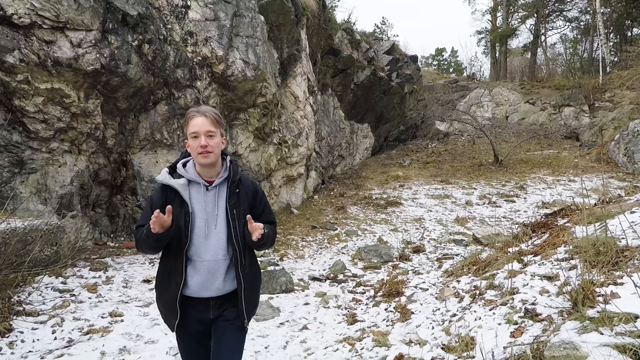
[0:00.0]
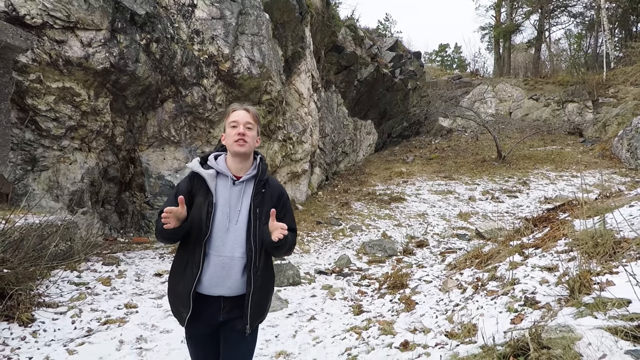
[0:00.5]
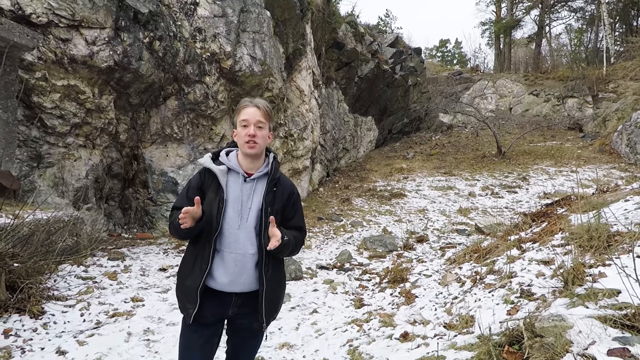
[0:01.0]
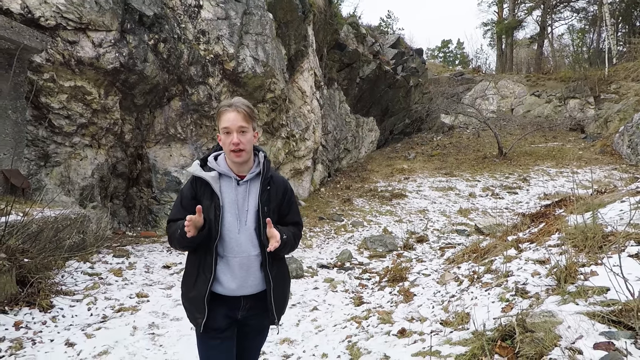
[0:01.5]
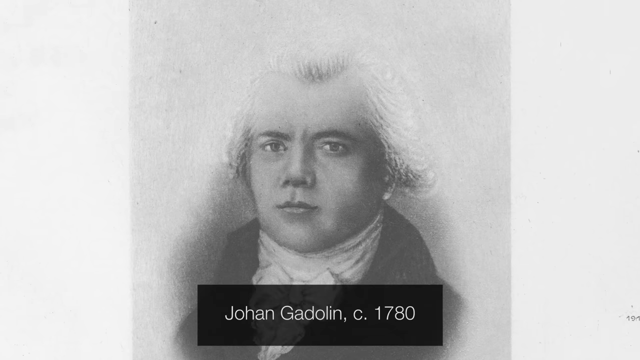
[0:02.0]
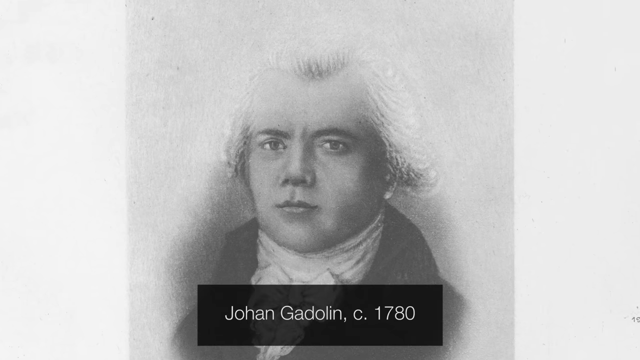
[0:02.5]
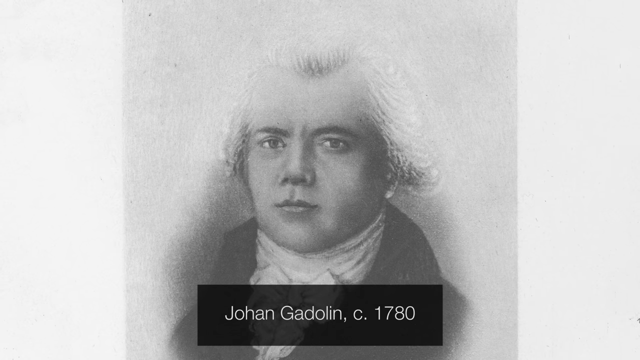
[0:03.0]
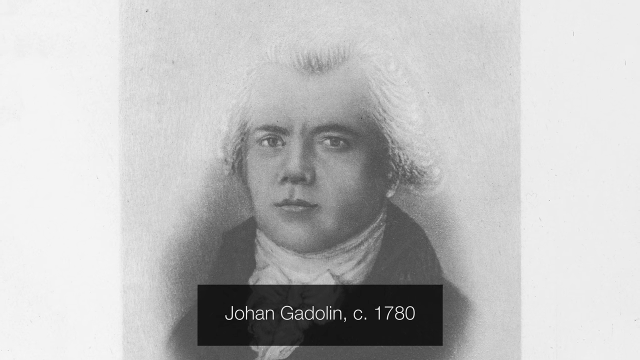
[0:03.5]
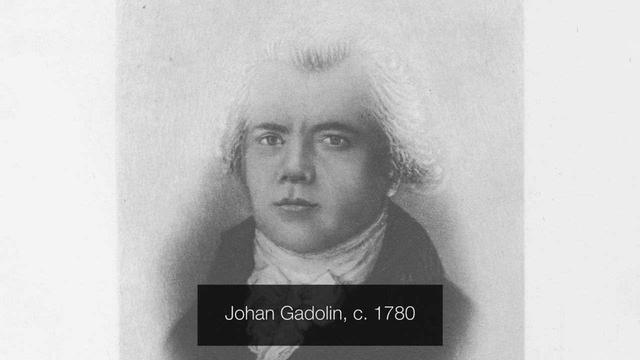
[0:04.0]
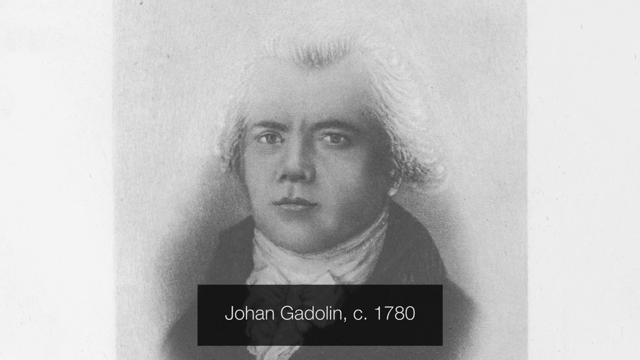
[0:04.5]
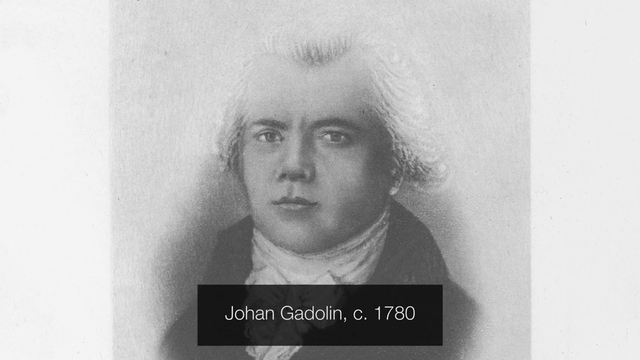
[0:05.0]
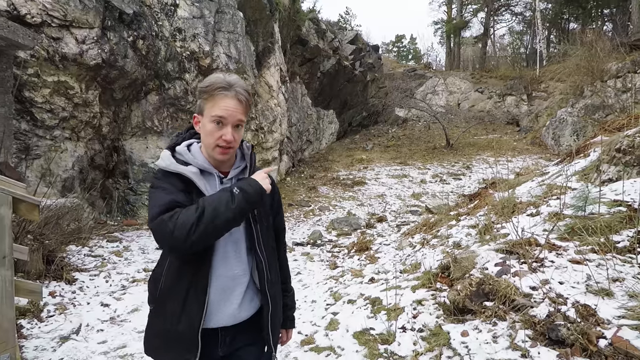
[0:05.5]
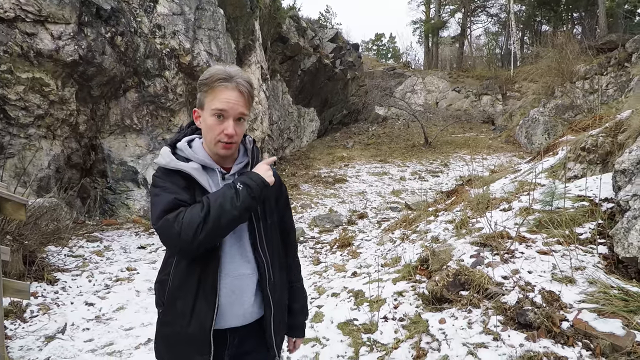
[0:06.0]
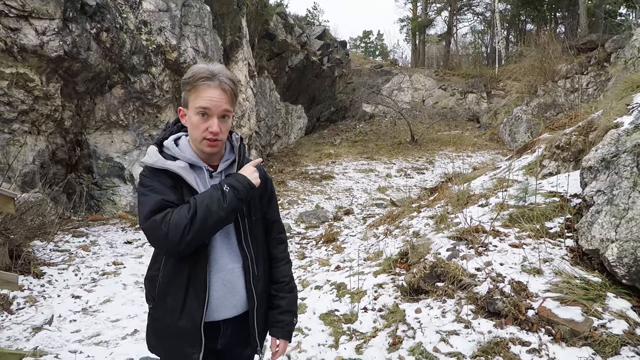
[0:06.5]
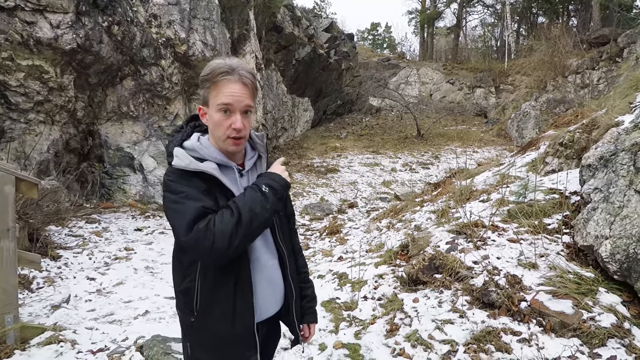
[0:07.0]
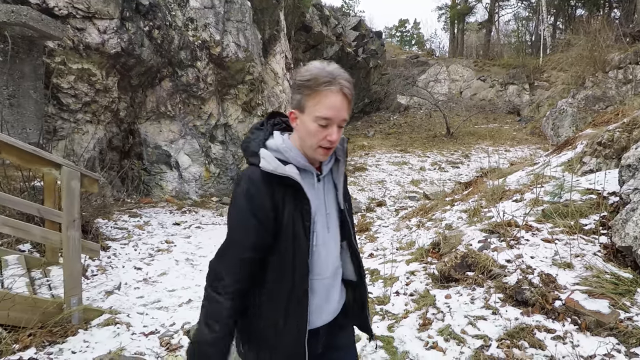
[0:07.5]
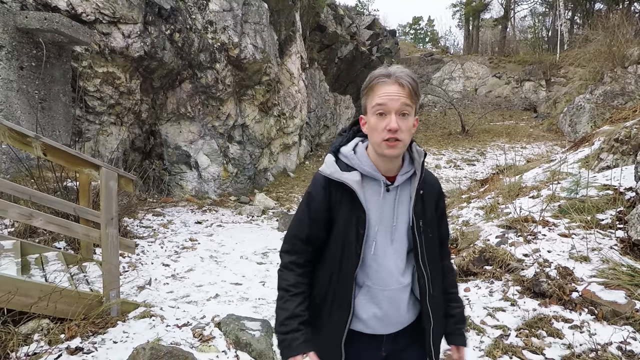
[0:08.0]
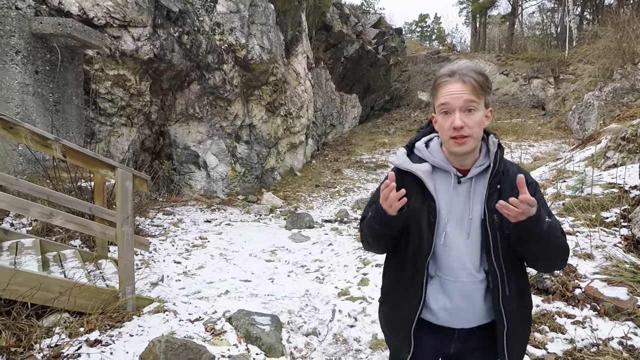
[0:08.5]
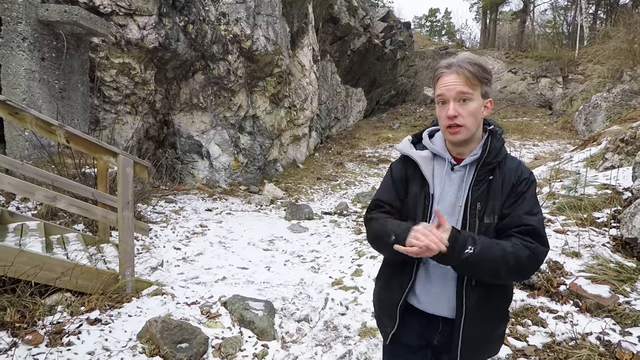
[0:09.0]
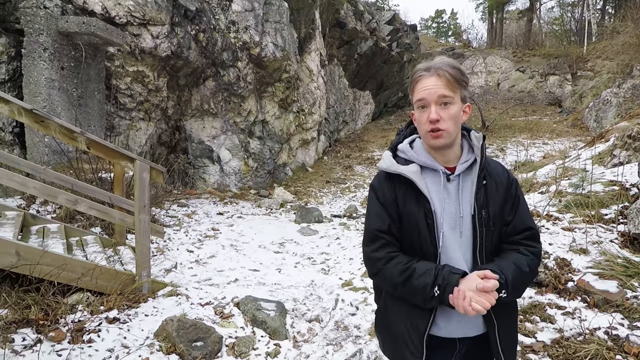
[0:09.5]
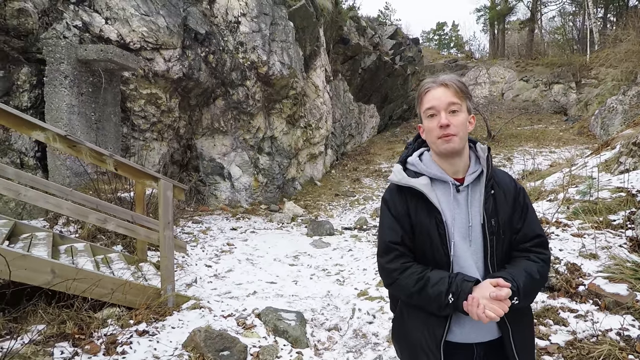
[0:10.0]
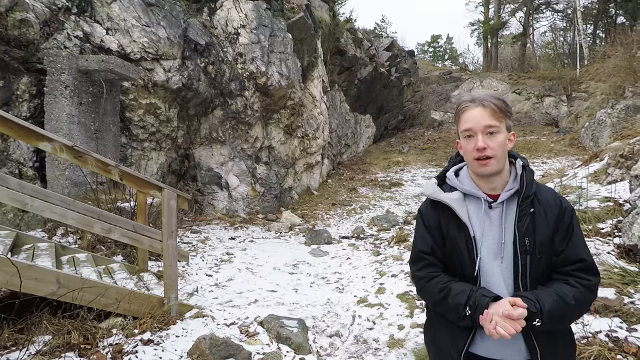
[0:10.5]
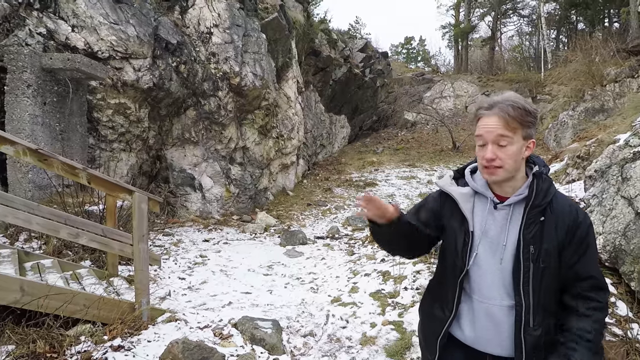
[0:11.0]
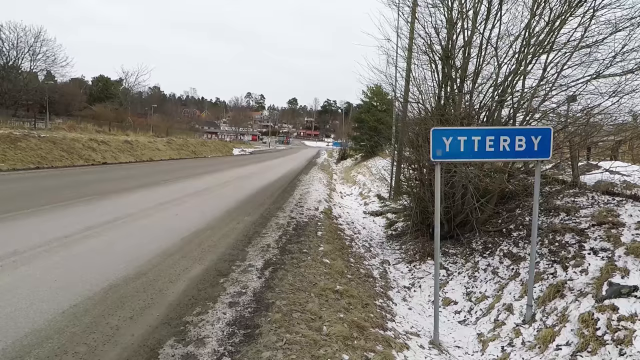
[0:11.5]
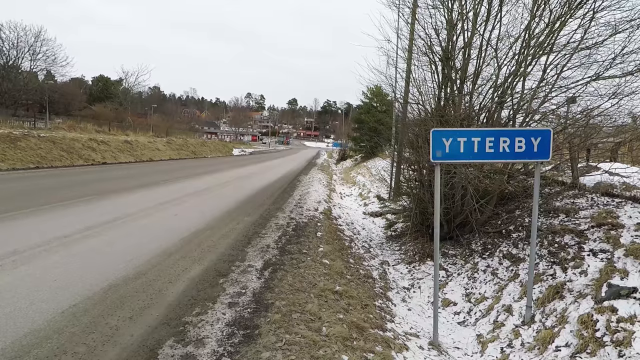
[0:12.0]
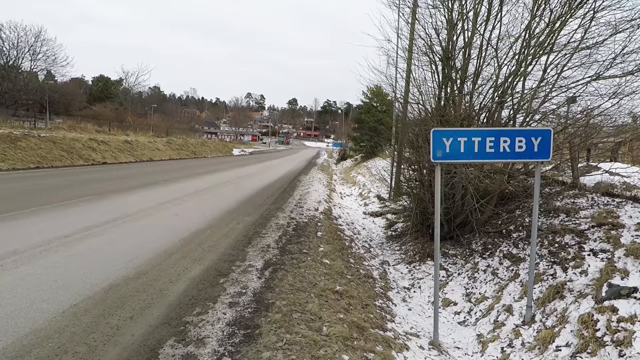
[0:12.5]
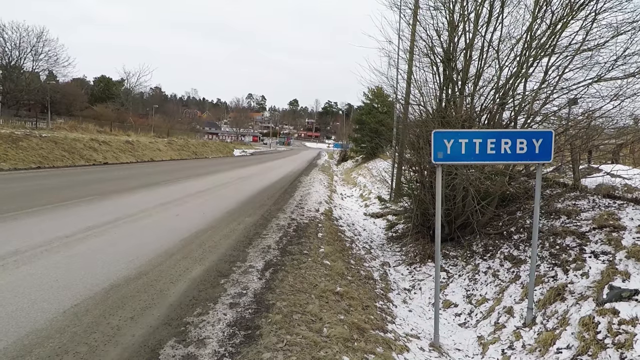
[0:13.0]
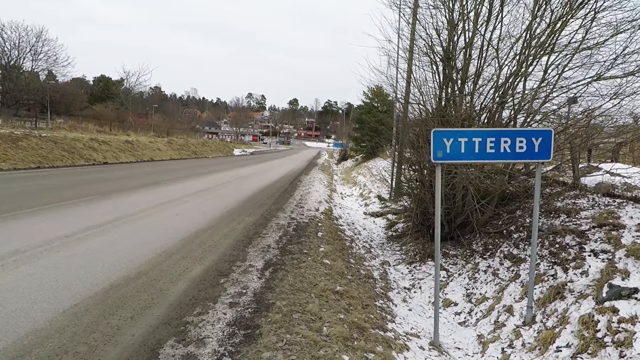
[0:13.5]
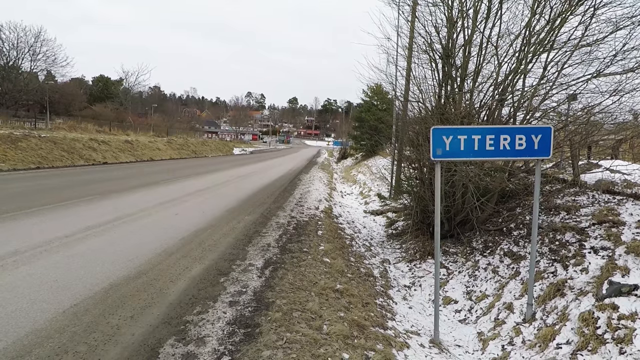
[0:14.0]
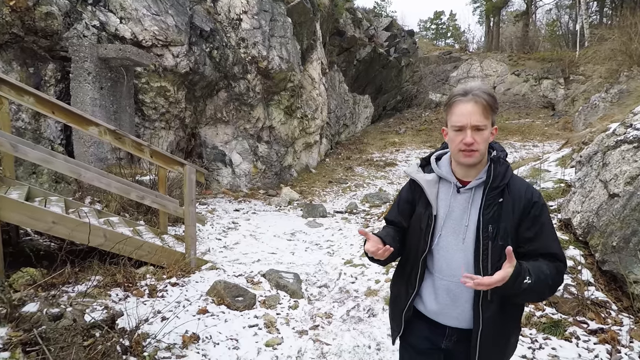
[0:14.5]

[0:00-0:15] The video is titled One Town, Four Elements, Yidderbee. A YouTuber's thumbnail is in the upper left corner; he looks like a man in his mid to late 20s. A picture keeps appearing of a man who looks like a composer from around Beethoven's time: a black and white image of a man with his hair pulled back, wearing a high-necked, kind of ruffled shirt. The YouTuber points to a road with a sign for the town of Yidderbee; the sign is blue, and the town looks kind of empty and desolate. He is then seen walking through the woods by a set of stairs, with a bit of snow on the ground, and he points to what is behind him. The place looks like it could be somewhere in the UK or elsewhere in Europe; the sign does not look like a traditional U.S. sign, and the narrator does not look American.